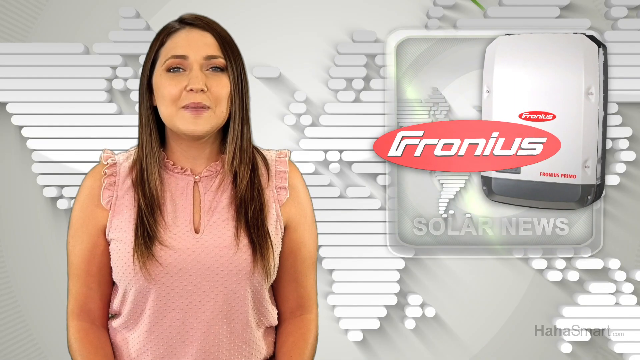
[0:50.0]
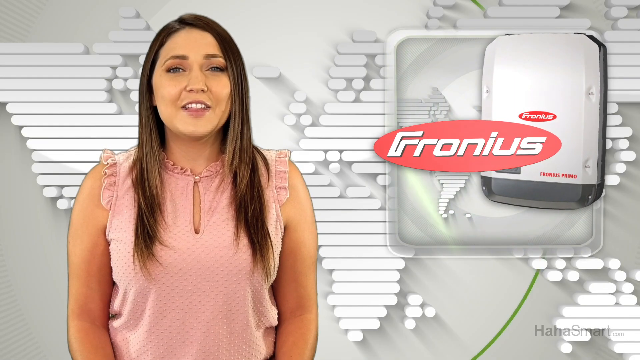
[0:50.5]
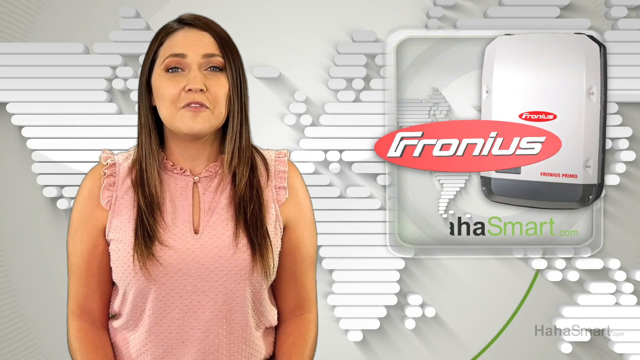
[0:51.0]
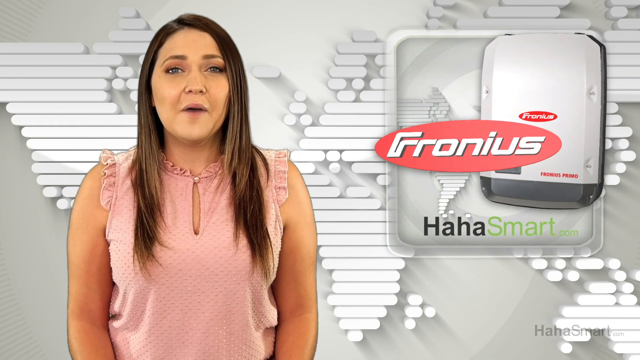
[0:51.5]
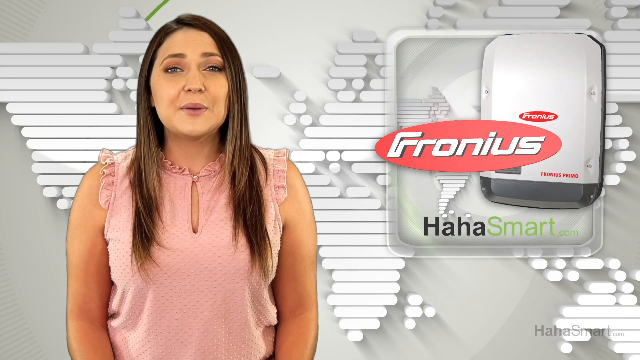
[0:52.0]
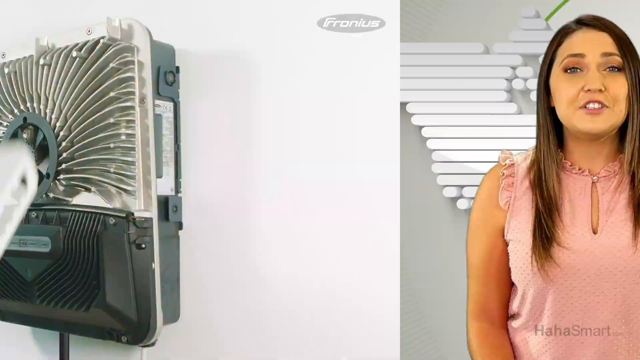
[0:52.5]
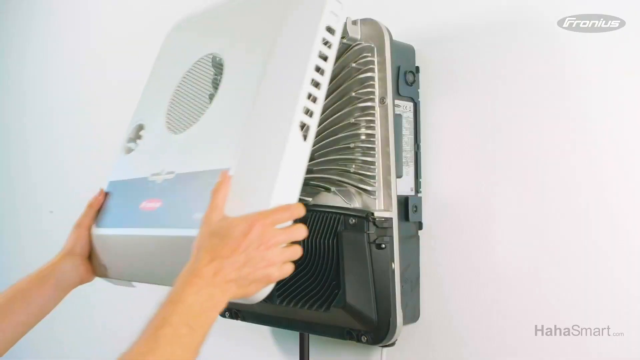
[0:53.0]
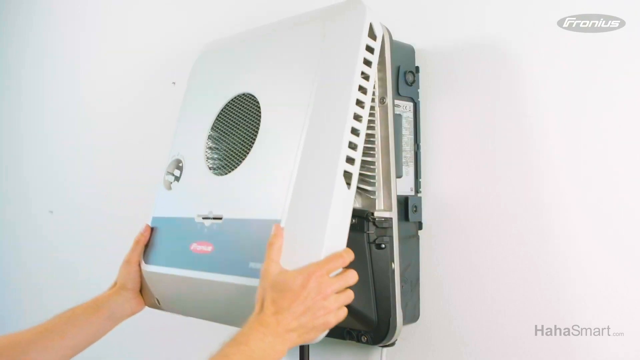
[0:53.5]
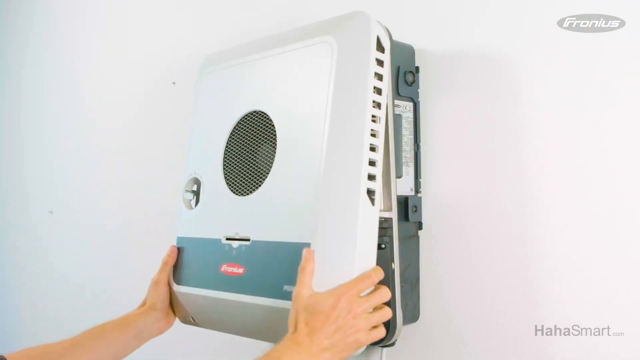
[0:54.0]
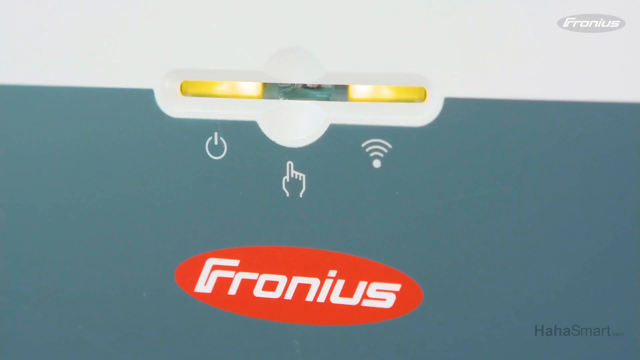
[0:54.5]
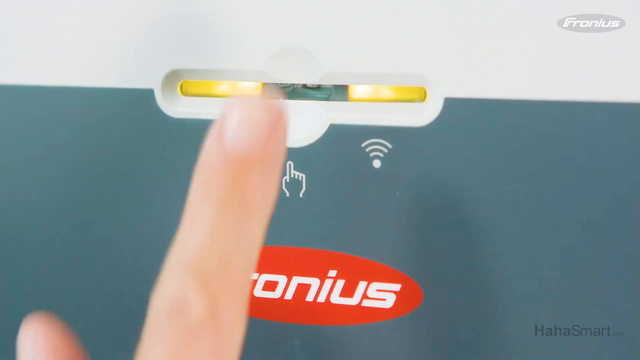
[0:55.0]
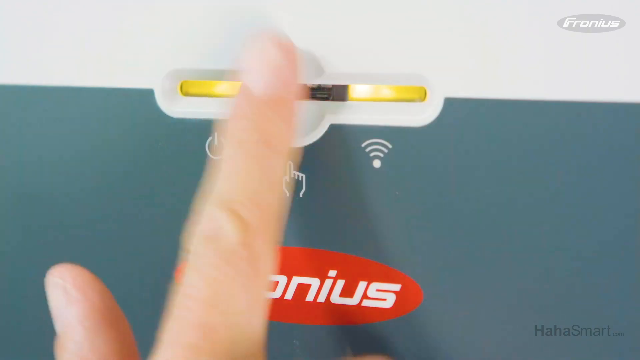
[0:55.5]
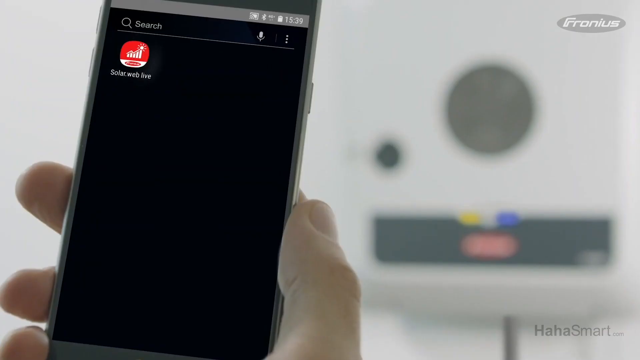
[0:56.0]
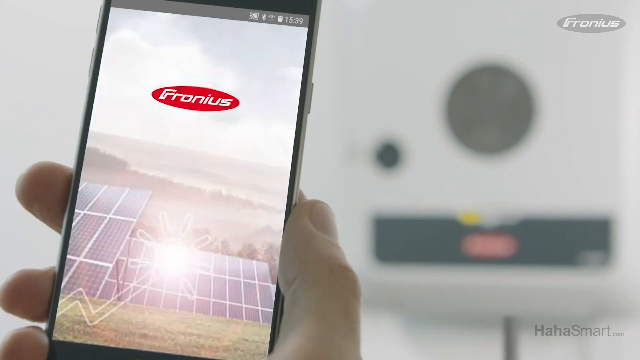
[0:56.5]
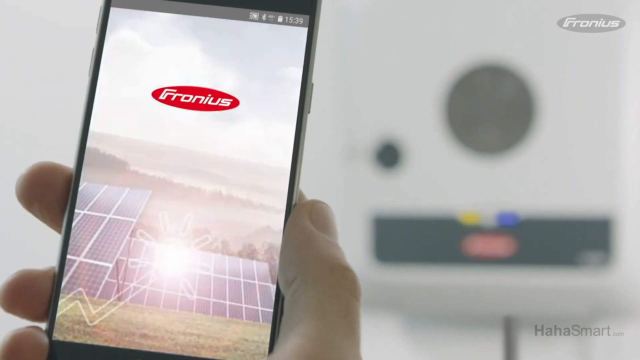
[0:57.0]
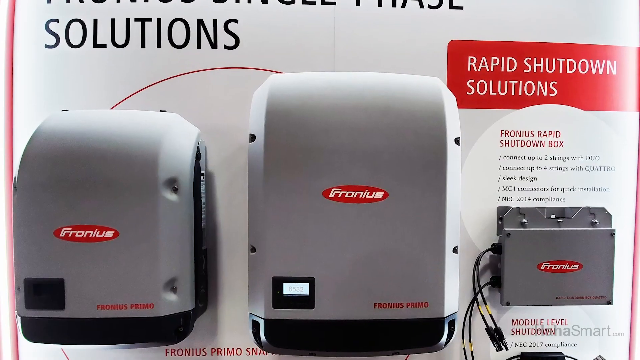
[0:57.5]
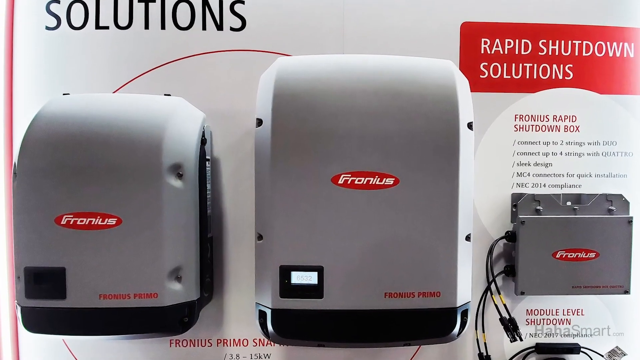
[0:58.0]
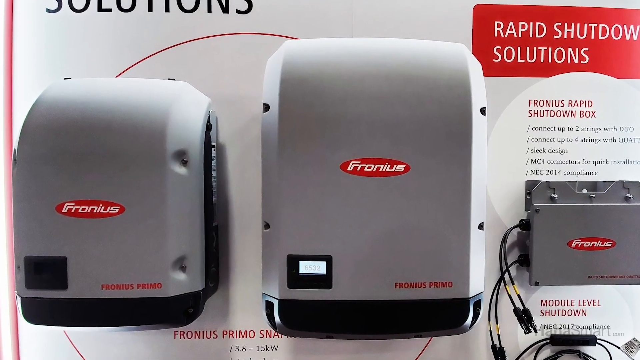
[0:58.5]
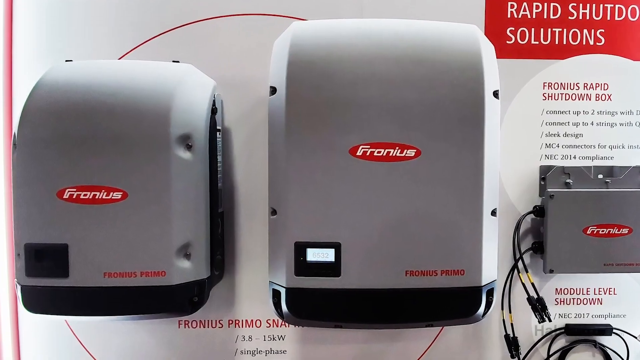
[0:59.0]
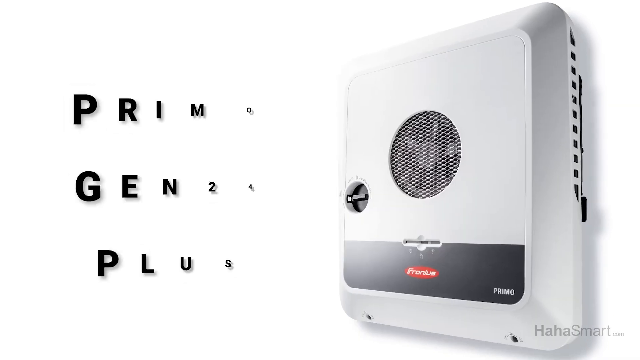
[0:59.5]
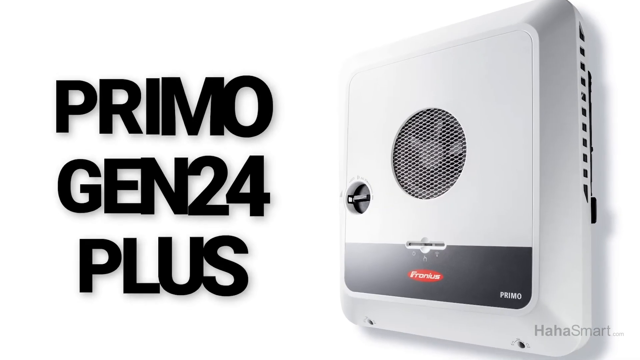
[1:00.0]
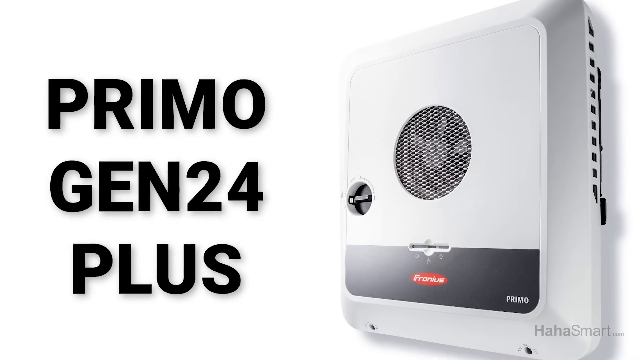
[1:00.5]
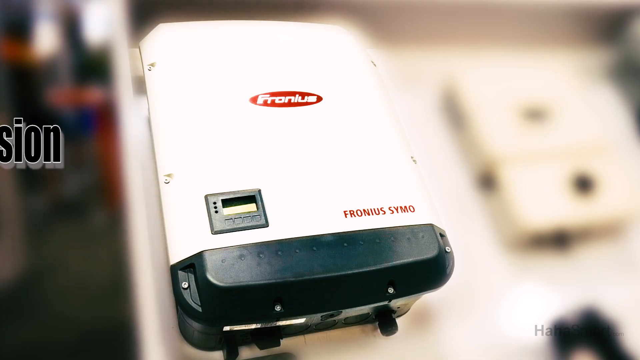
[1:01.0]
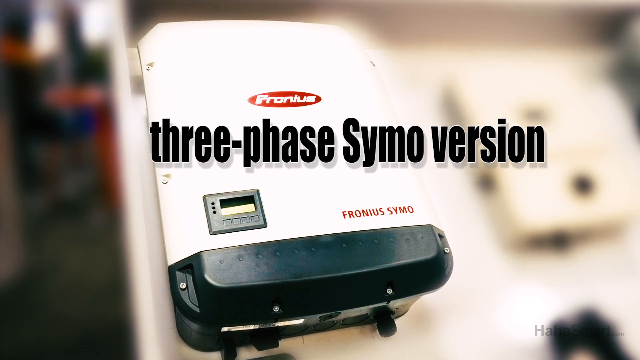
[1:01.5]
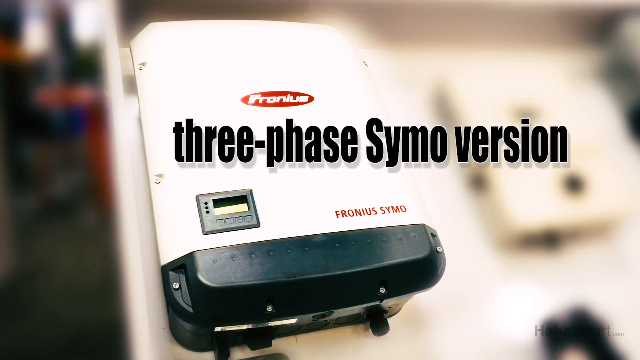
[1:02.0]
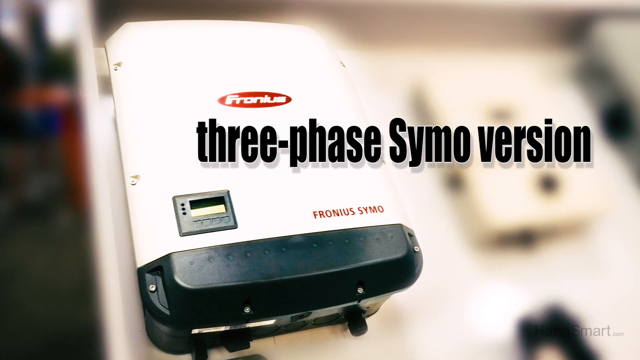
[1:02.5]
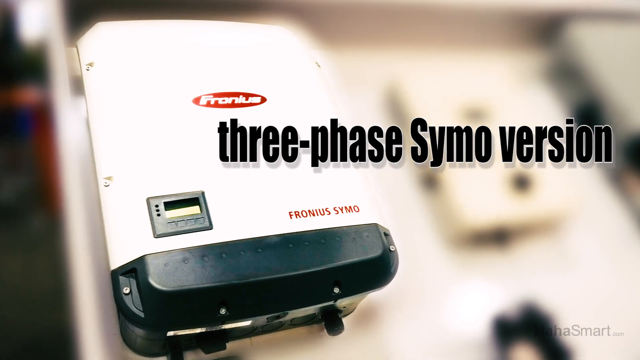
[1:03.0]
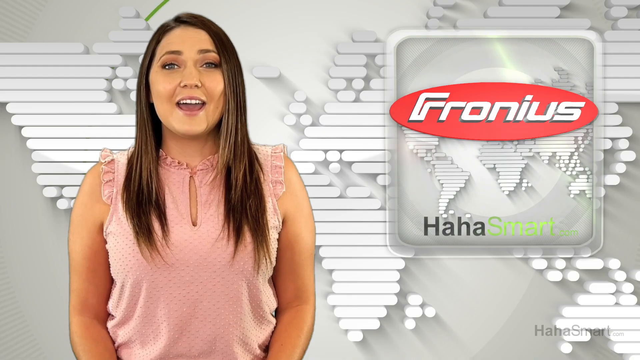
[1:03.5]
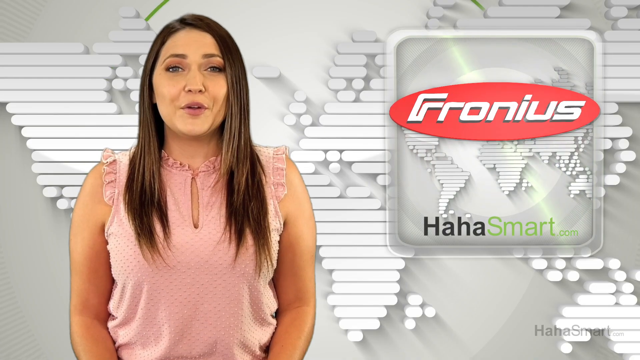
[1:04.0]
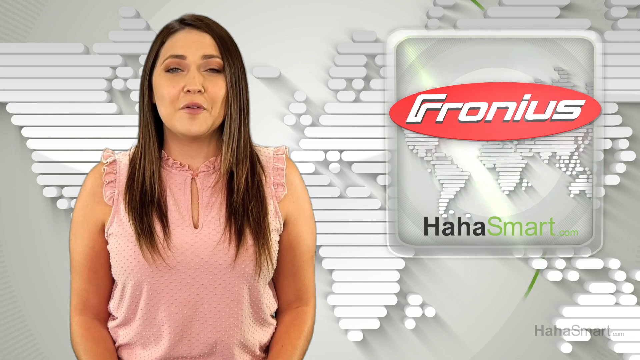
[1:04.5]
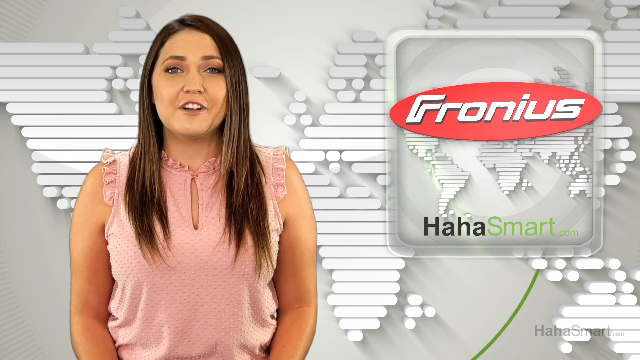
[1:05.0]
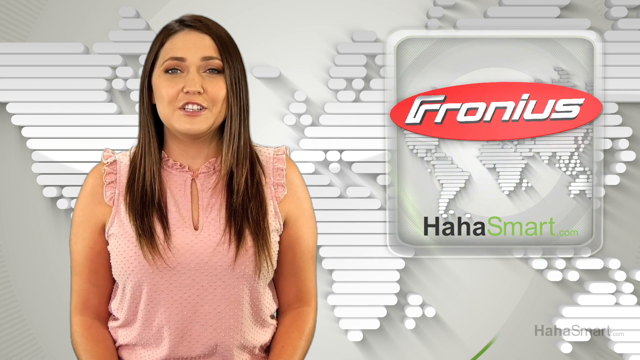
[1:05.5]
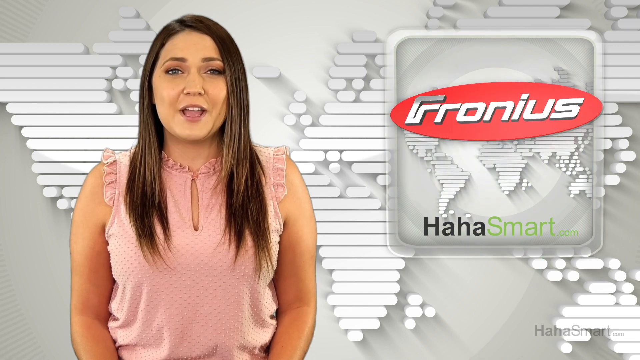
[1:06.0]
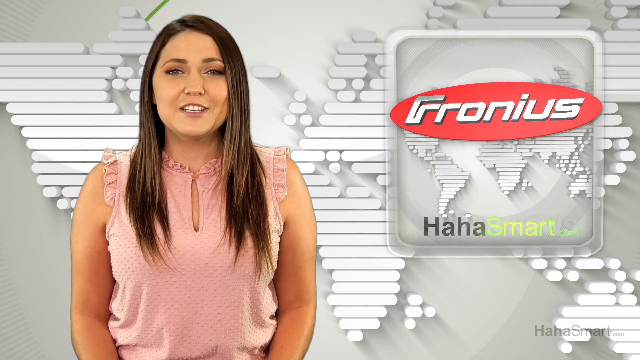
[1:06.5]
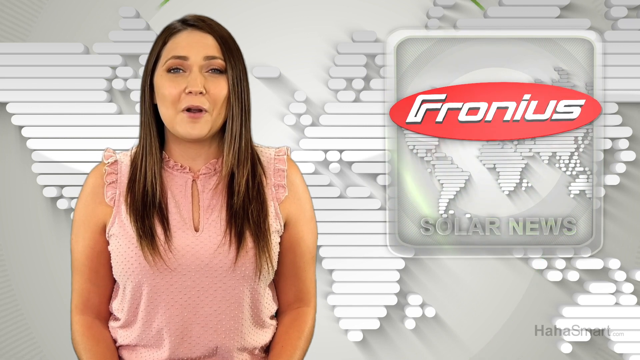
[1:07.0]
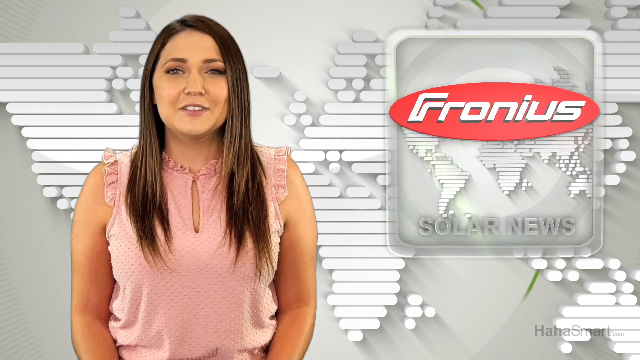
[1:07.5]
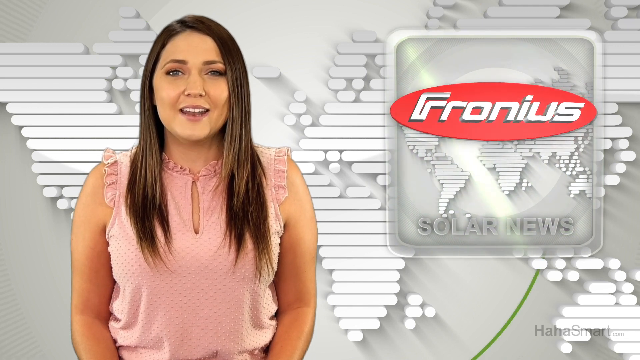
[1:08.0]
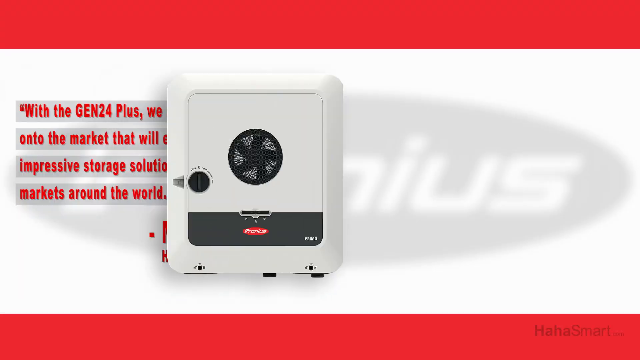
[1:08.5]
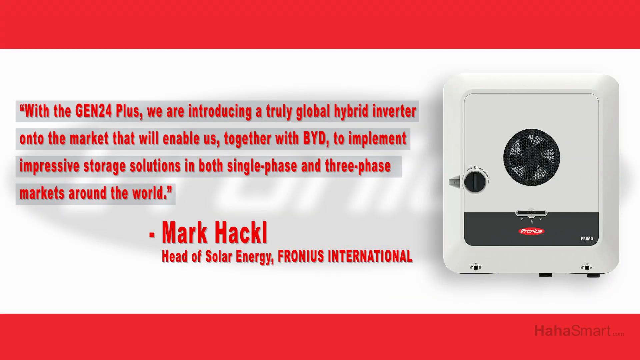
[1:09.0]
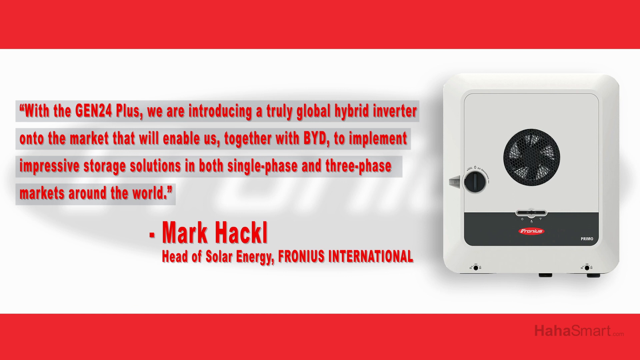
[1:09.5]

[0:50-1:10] The white and red Fronius logo remains inside the clear rectangle. Below the logo is "Haha" in black text and "Smart.com" in green. After a transition screen, a panel cover is placed on top of what appears to be a wall box; two white hands grip each side toward the bottom of the box. A button on the box is pushed. A close-up shows a phone with the Fronius app with solar panels. Next comes a screen with two of the Fronius panel boxes, and black text appears reading "Primo Gen 24 Plus". That fades to a new screen reading "three-phase Symo version", which scrolls quickly across the screen from left to right and disappears, with the Fronius panel cover in the background. The video returns to Jessica, who continues talking, and a red paragraph of text comes into view across the screen; it is from Mark Hackl, head of solar energy at Fronius International. To the right of the text is a white box with a black-looking circular fan.